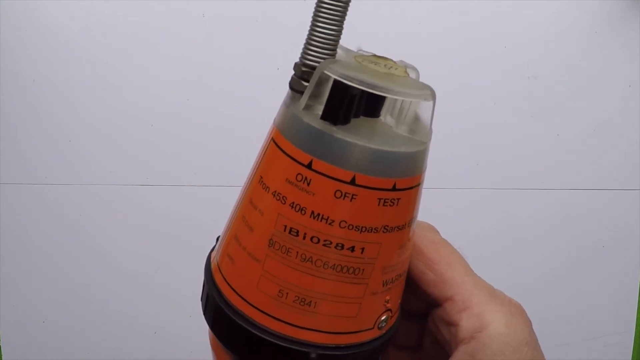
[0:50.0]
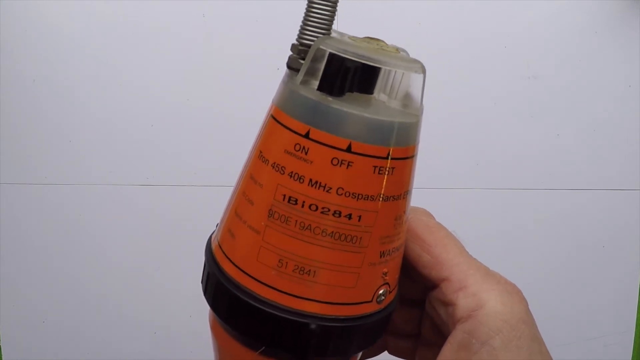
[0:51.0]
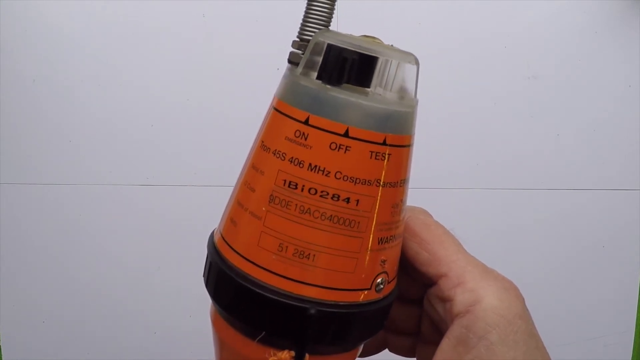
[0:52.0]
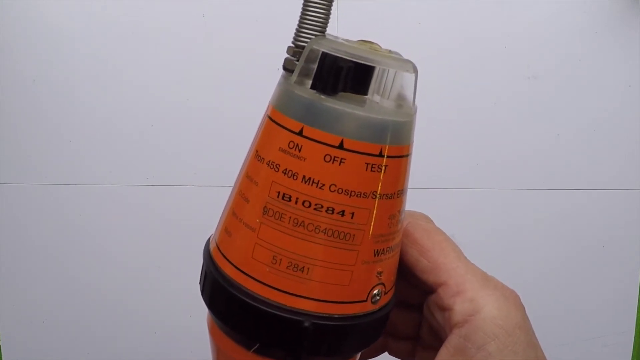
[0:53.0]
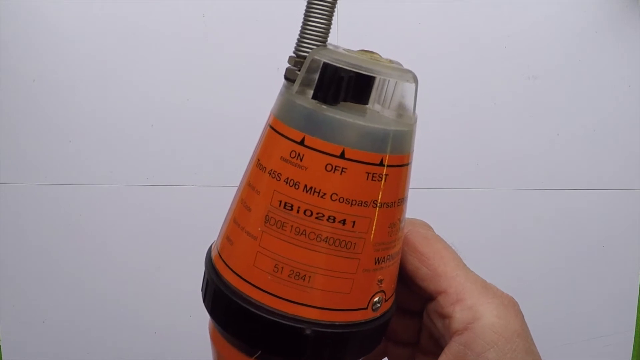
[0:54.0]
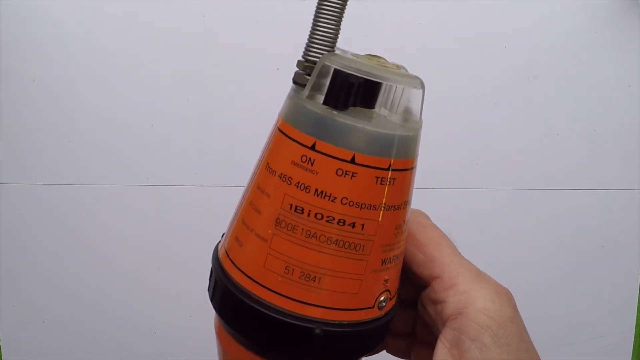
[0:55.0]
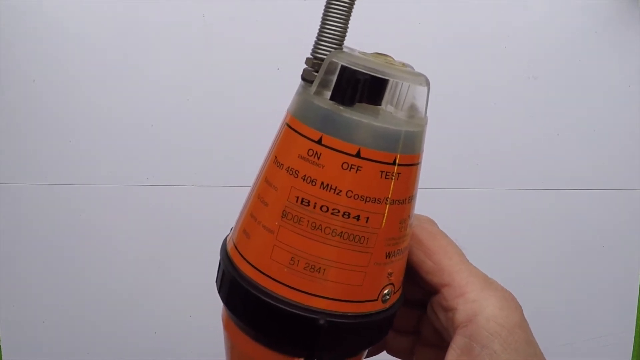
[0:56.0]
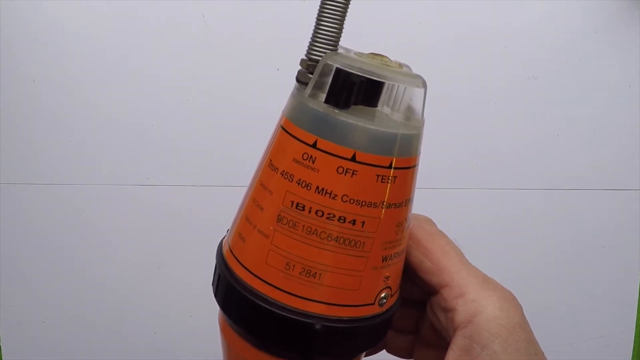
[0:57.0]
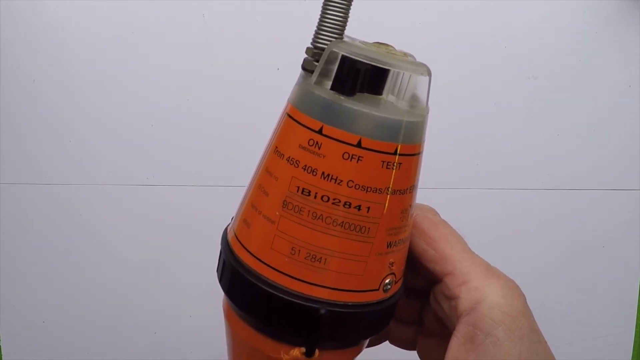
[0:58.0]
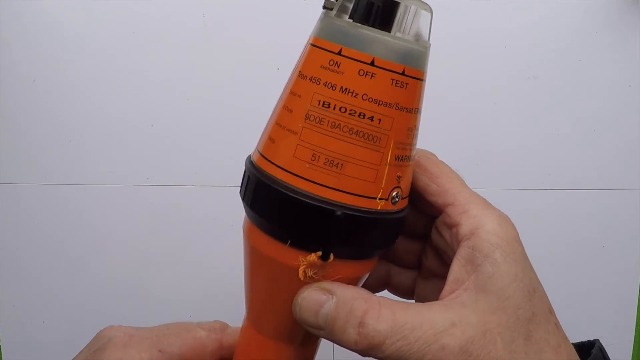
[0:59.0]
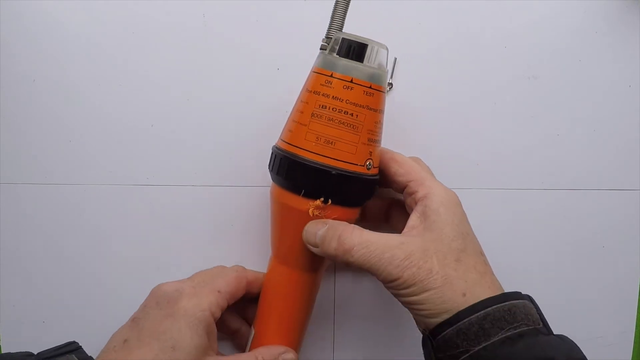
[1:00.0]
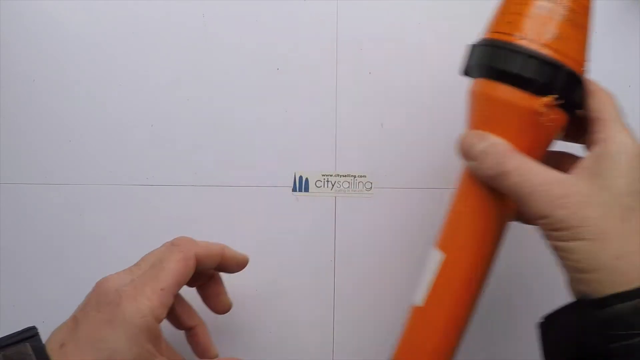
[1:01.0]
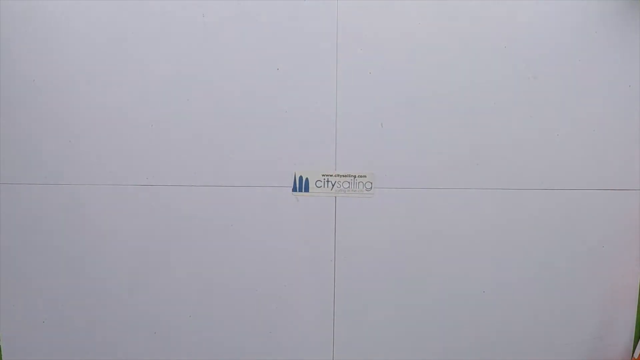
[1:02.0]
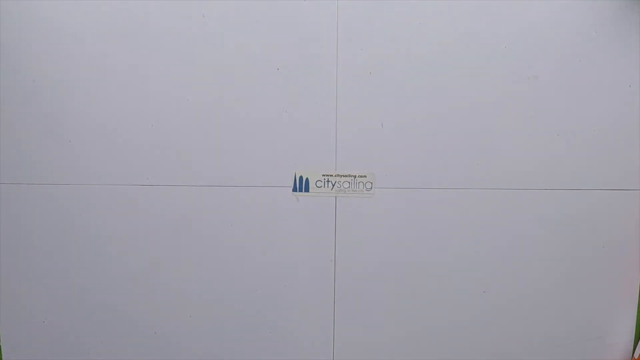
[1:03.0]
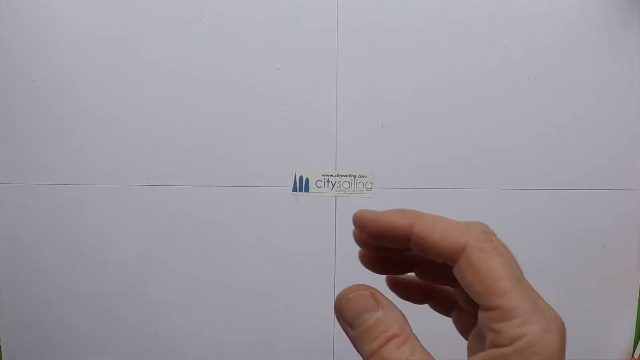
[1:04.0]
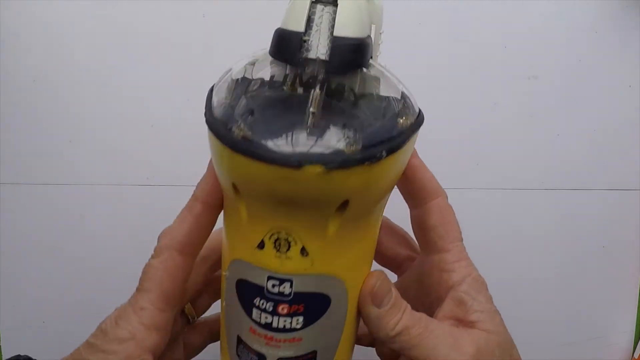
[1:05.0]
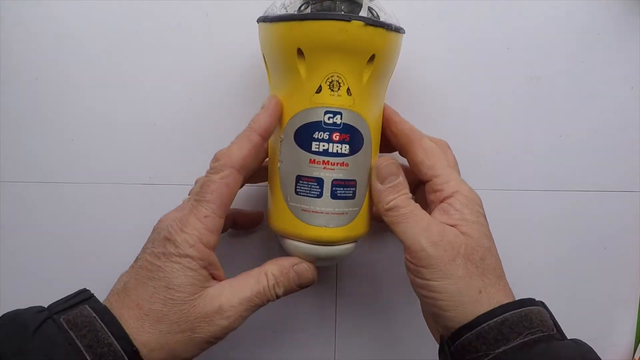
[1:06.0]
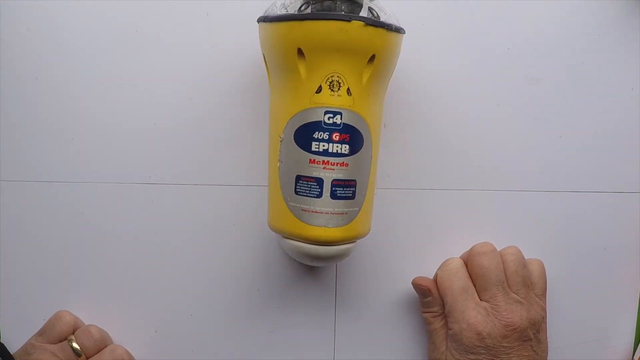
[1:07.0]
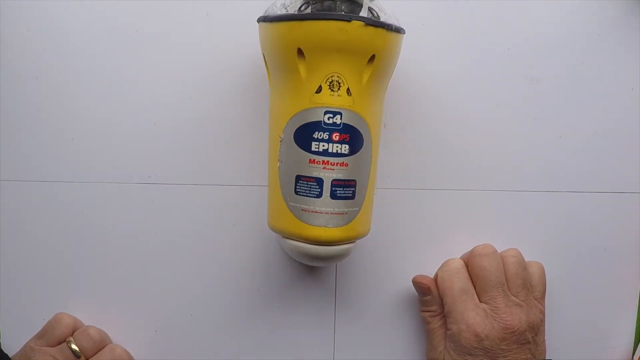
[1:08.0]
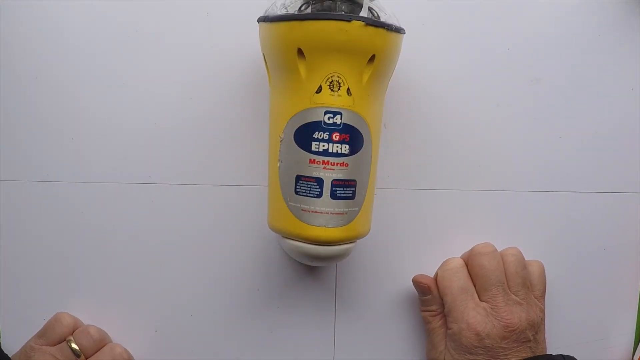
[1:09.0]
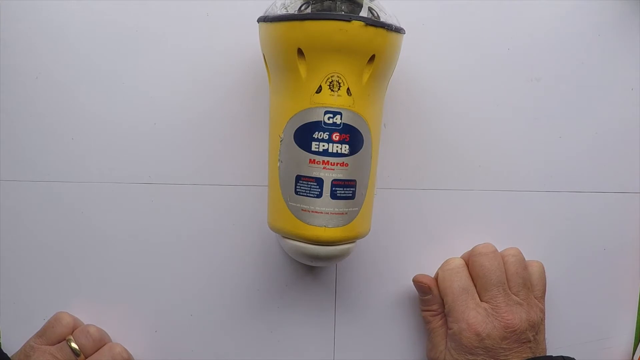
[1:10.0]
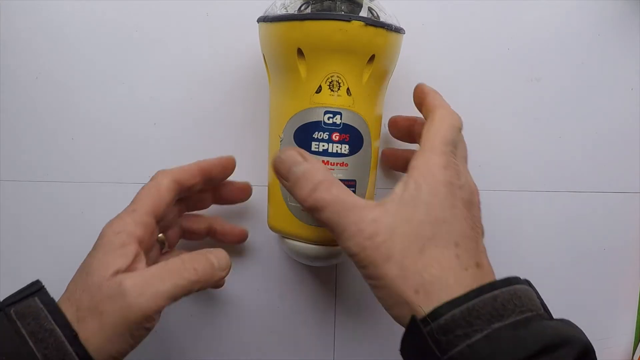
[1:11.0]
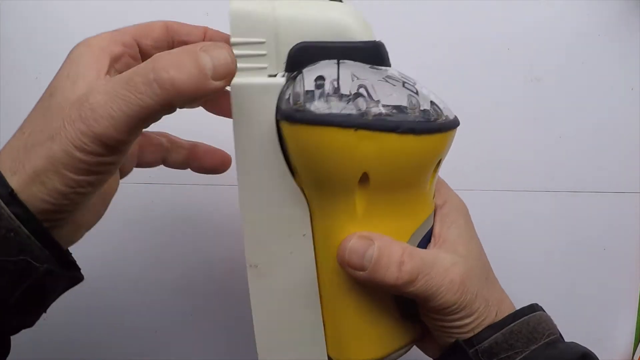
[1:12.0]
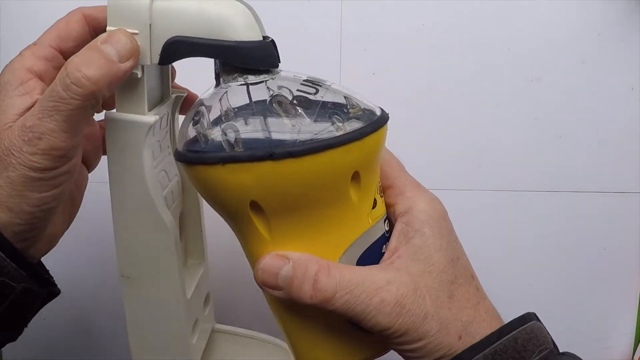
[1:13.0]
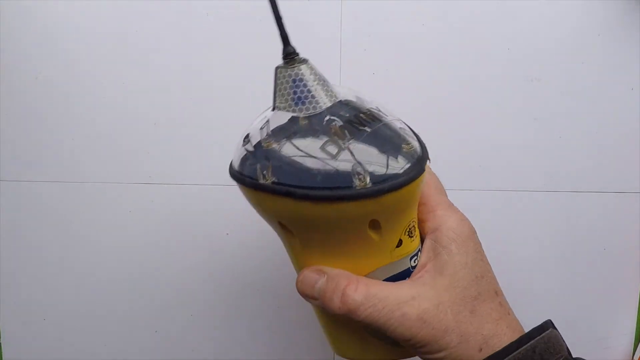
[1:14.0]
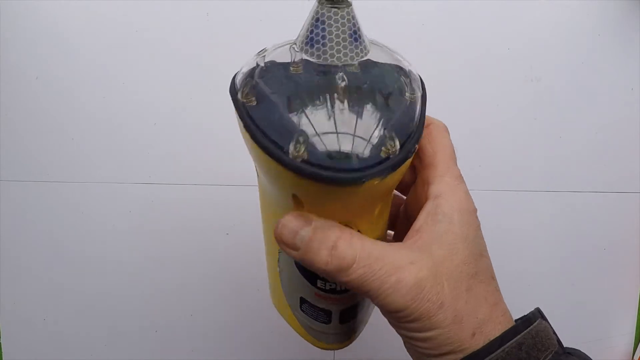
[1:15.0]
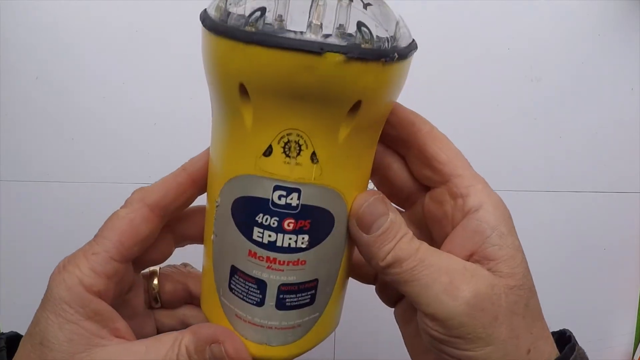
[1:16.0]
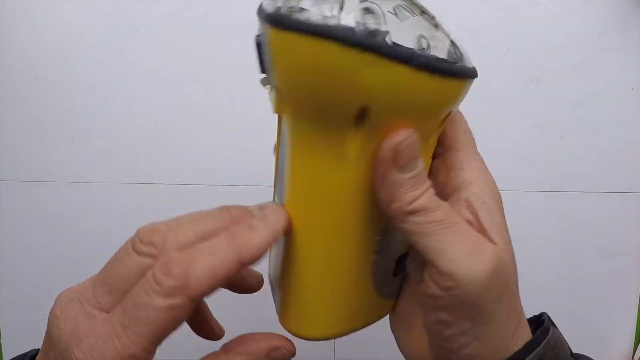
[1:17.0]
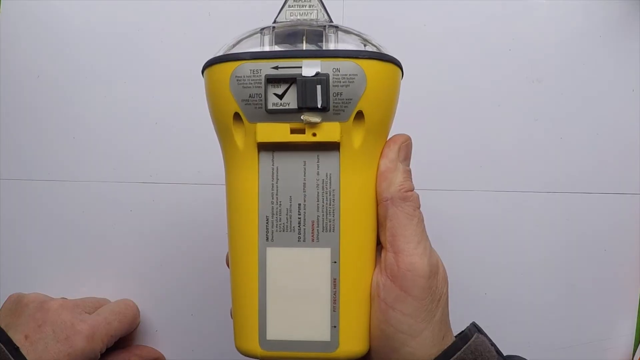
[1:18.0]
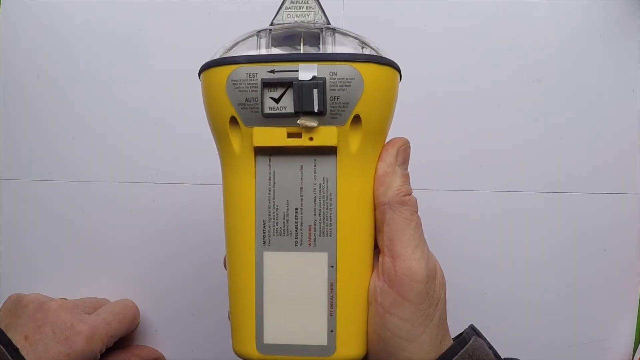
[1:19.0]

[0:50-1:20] Against the white background, a person holds a capacitator that is orange with black on the bottom; it appears to have a regulator on top with a spiral aluminum antenna, and some sort of chain with an attachment on top of the clear piece of equipment. As he turns it in his hand, it is evidently quite a long piece of equipment. He moves it to the right side and brings in another piece of equipment: a large yellow machine with a clear opening on top and some text and a logo on the front. It is large enough that he needs two hands to hold it in place as he moves it back and forth, and he finally lays it on the table for viewing. It has an attachment, which he pulls out as if it were on a charger or some sort of mechanism.